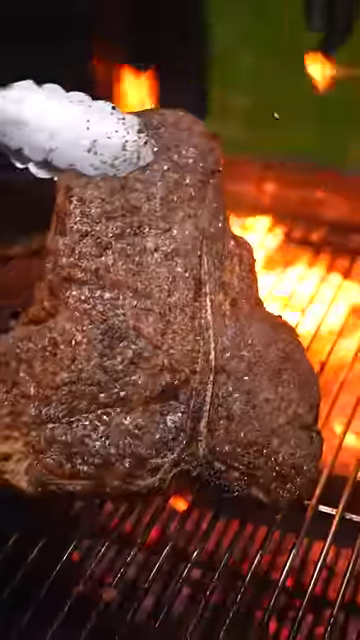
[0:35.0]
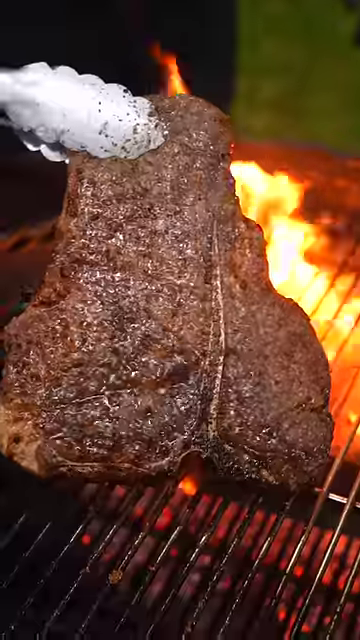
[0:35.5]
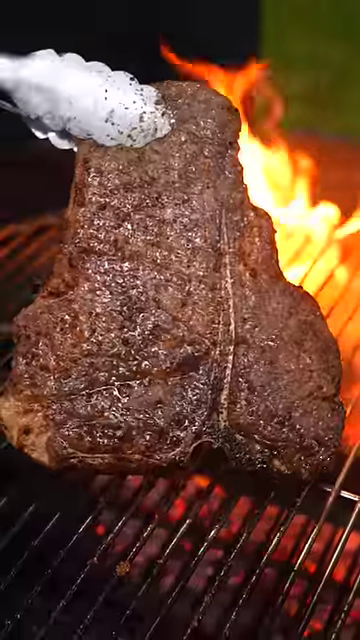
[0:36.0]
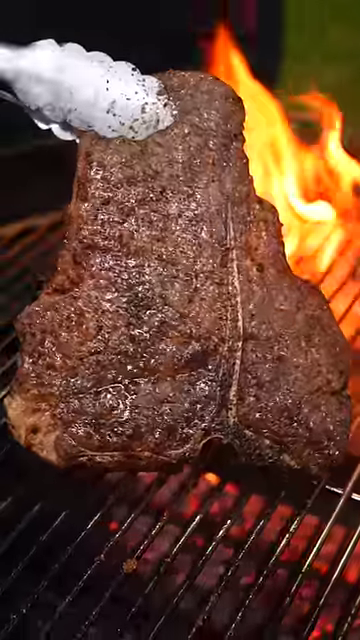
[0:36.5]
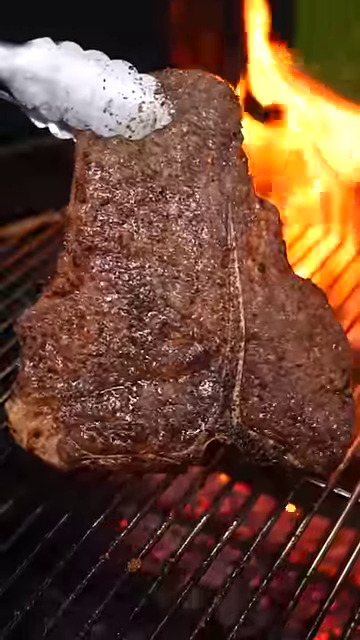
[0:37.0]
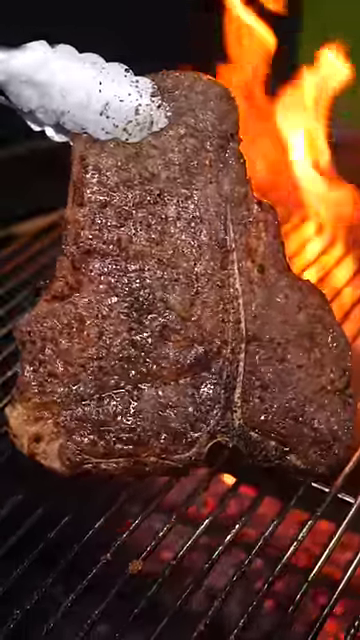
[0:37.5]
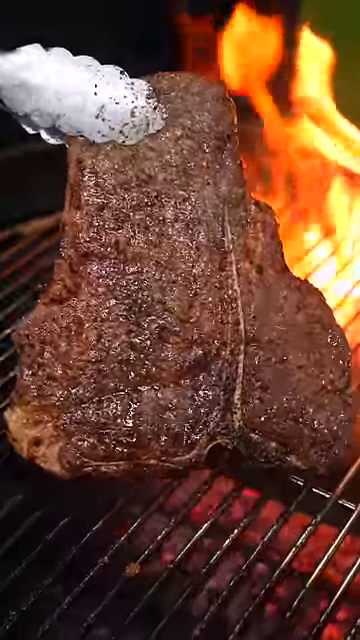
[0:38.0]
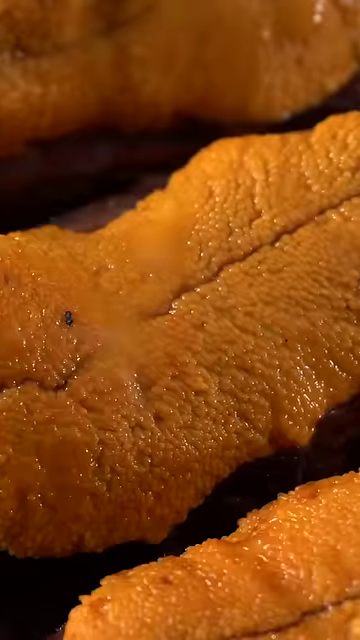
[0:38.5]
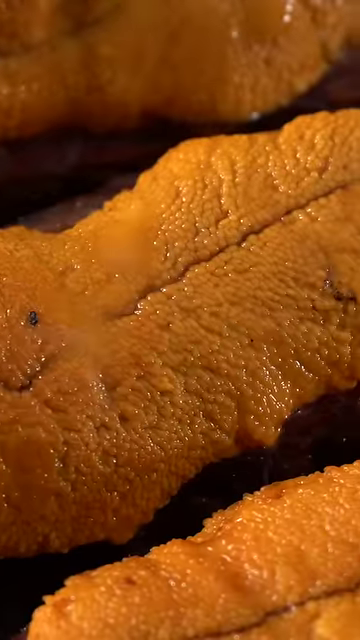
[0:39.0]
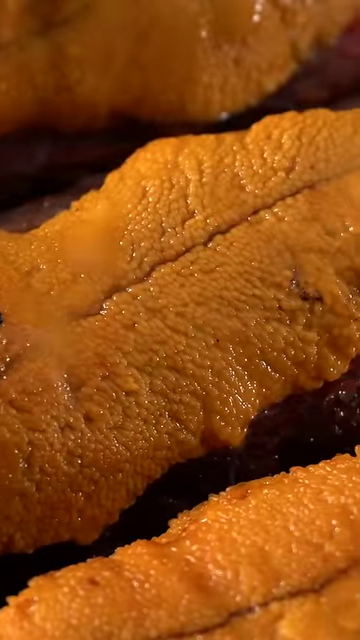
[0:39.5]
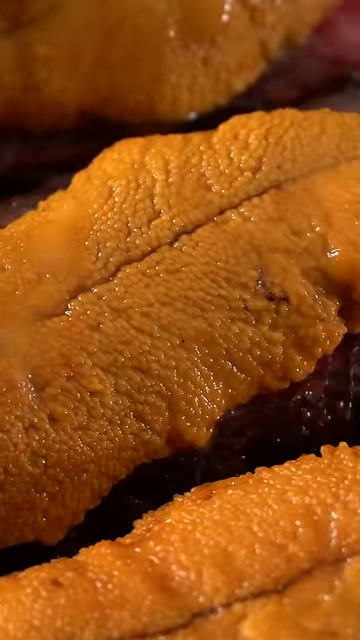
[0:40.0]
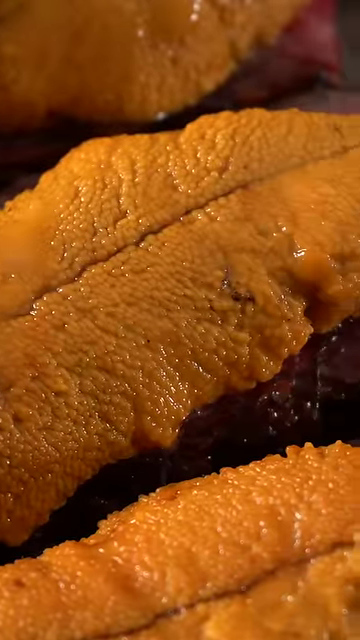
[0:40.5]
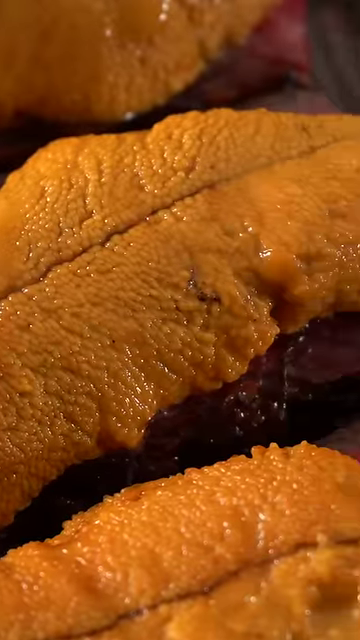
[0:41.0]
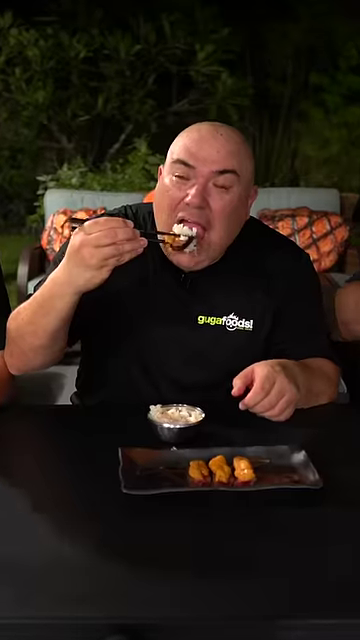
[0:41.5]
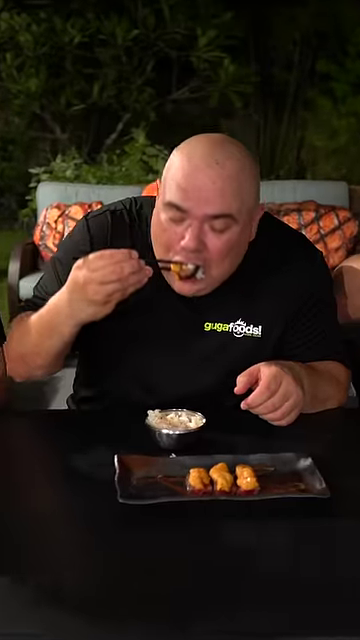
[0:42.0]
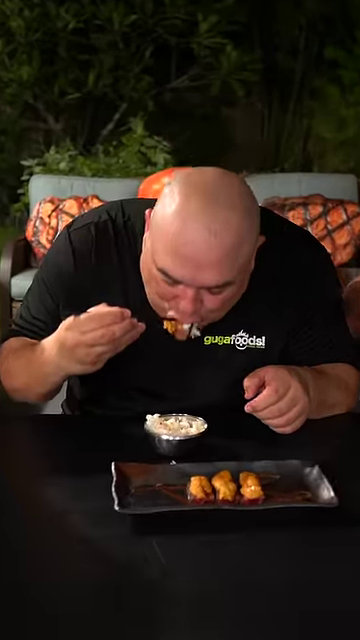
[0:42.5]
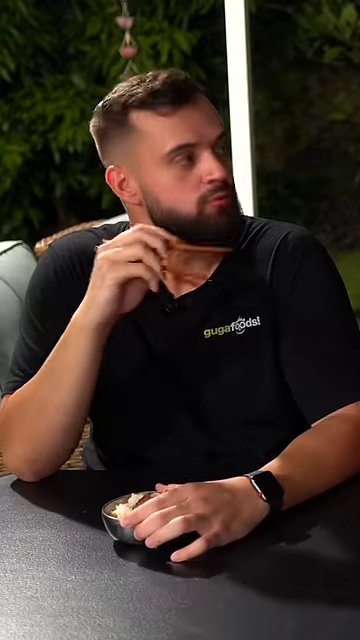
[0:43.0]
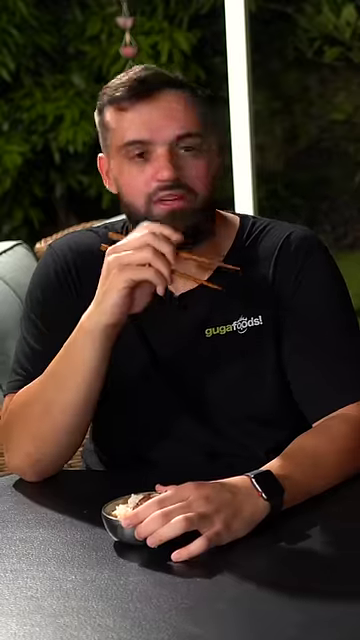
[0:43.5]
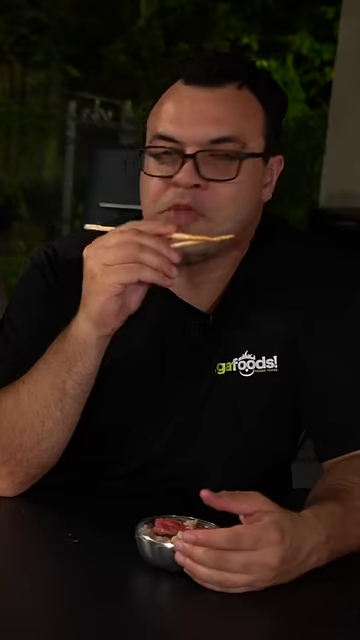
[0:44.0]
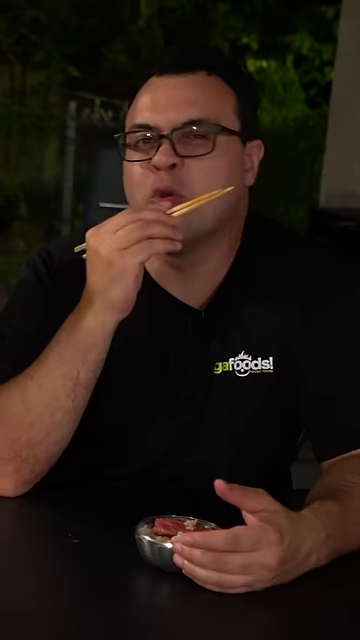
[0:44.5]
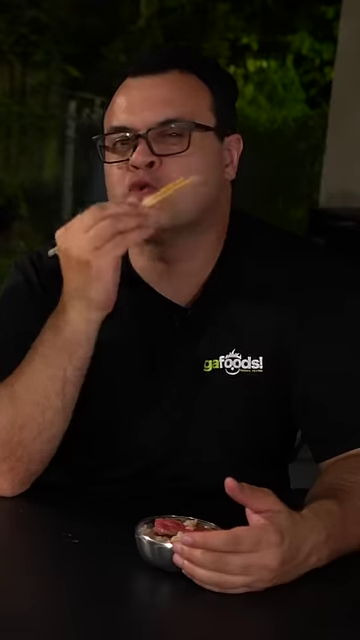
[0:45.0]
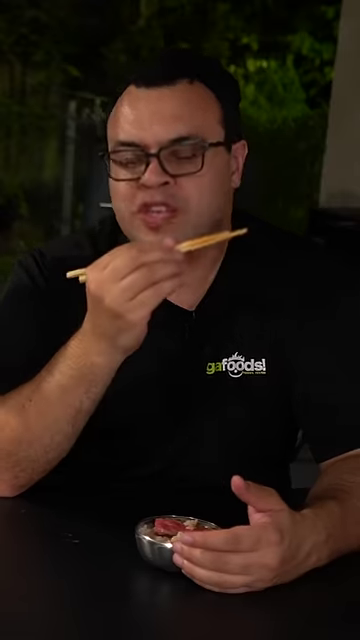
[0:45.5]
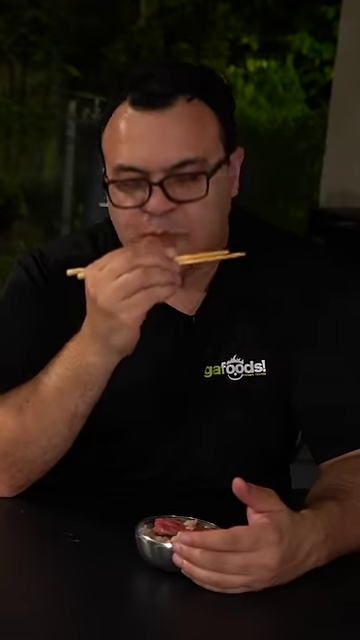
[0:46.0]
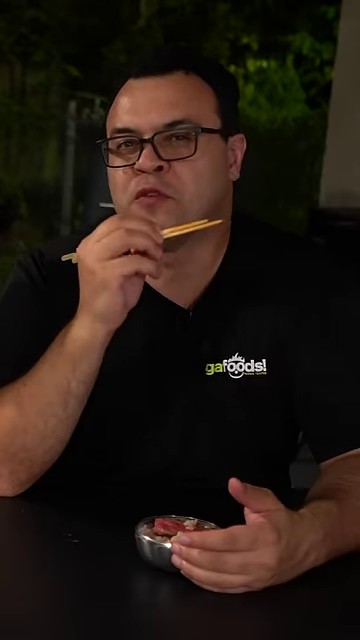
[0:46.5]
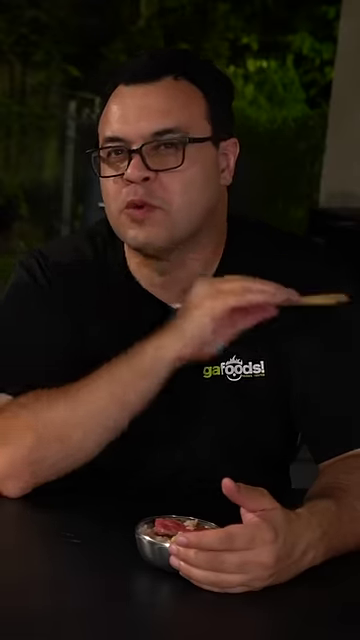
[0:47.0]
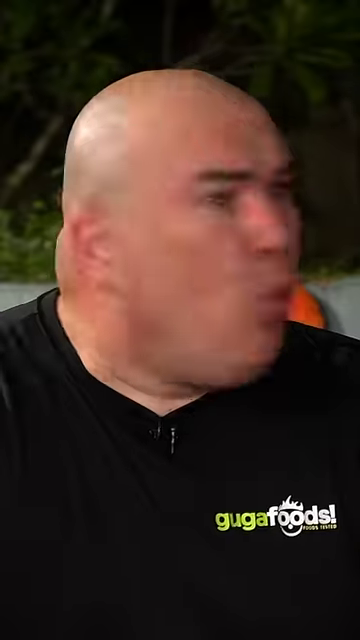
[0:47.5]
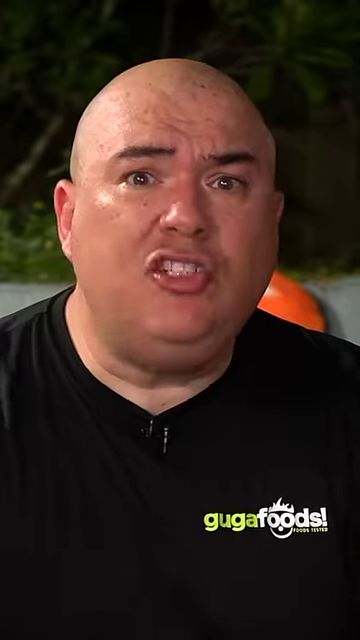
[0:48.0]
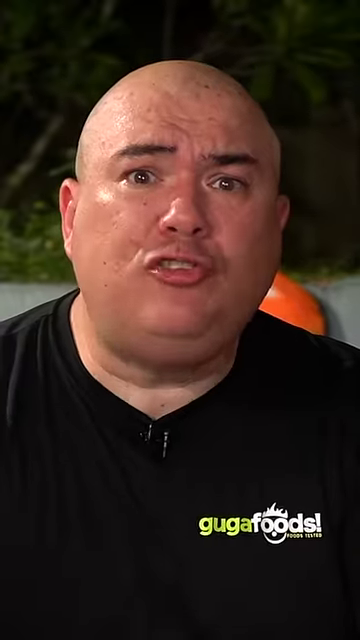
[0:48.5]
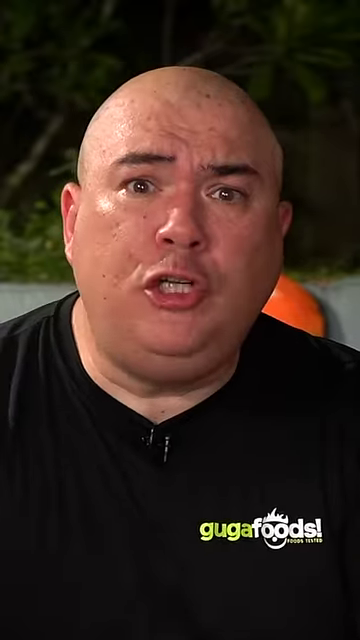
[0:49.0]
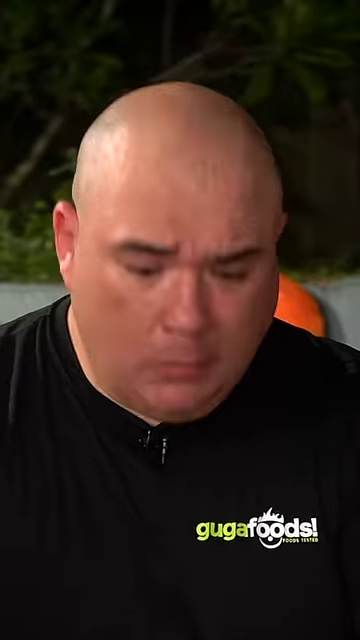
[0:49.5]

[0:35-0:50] A steak is held up over a grill with tongs. Then elongated pieces of the sea urchin-type yellowish substance are shown, their spongy surface looking kind of like wet terry cloth, with the yellow substance shown interspersed with the steak. A man in a black shirt seemingly enjoys eating one of the pieces of the yellow sea urchin-like substance. Another man, who has a beard, holds chopsticks up and is sort of pointing or indicating with them, though he is not really seen eating with them. A third man, wearing glasses, holds chopsticks in his right hand and a small plate in his left hand; he seems to be eating some of the items, and he is speaking. The bald man is then shown in close-up with a surprised look on his face.